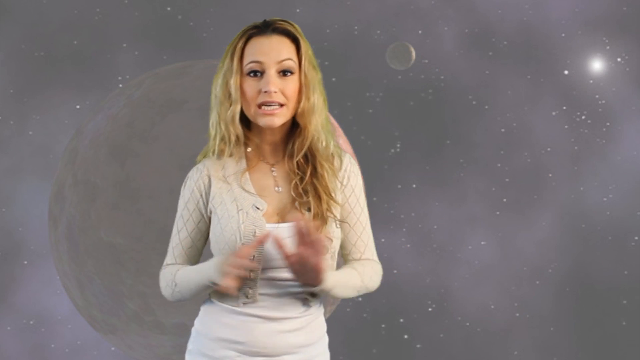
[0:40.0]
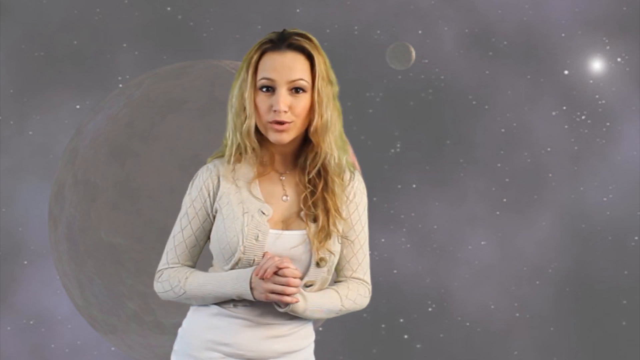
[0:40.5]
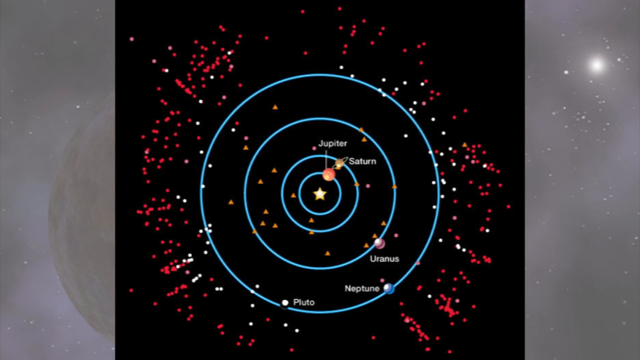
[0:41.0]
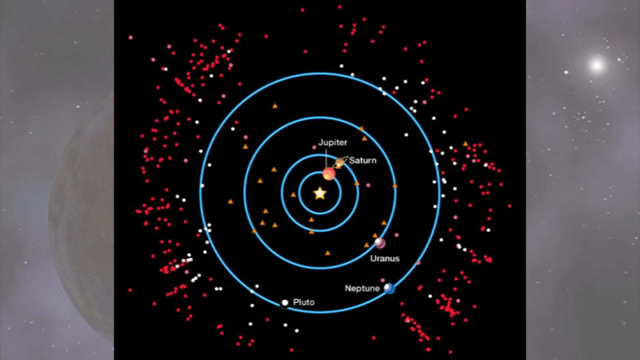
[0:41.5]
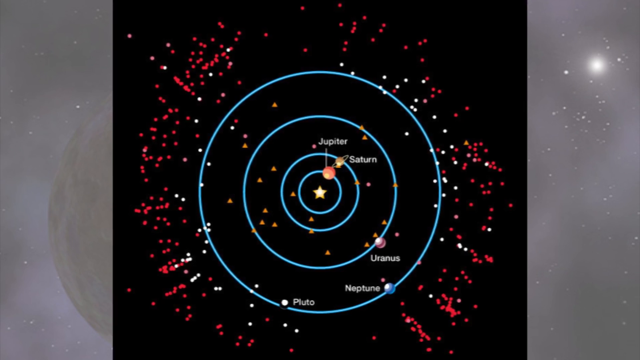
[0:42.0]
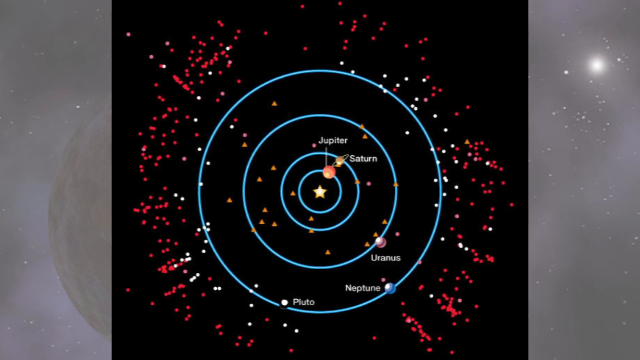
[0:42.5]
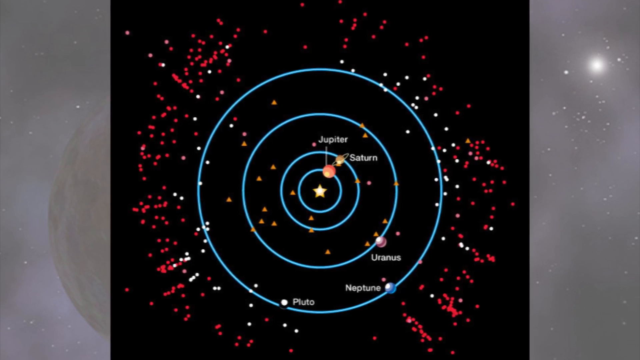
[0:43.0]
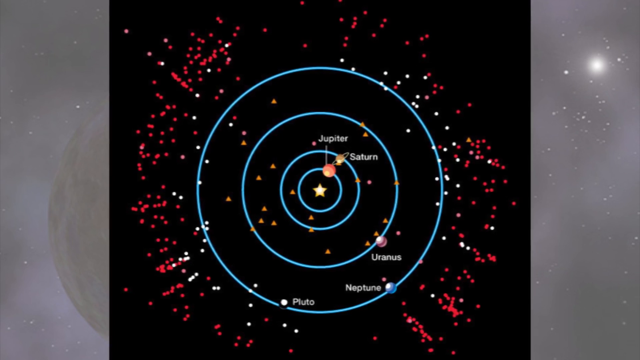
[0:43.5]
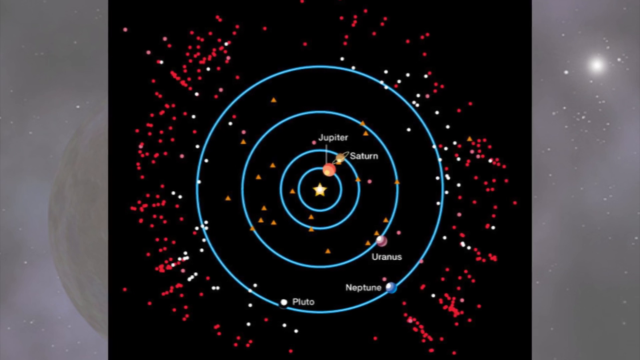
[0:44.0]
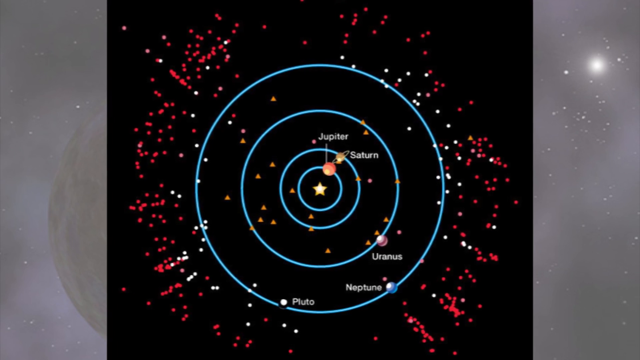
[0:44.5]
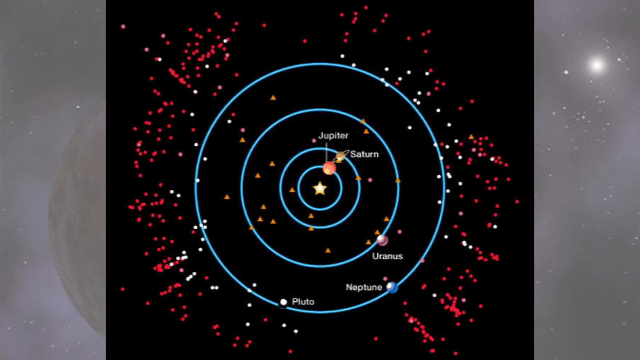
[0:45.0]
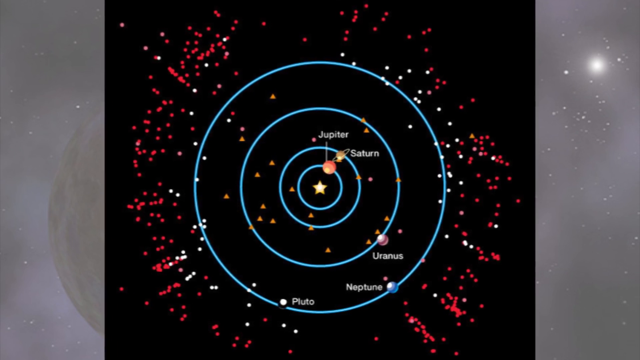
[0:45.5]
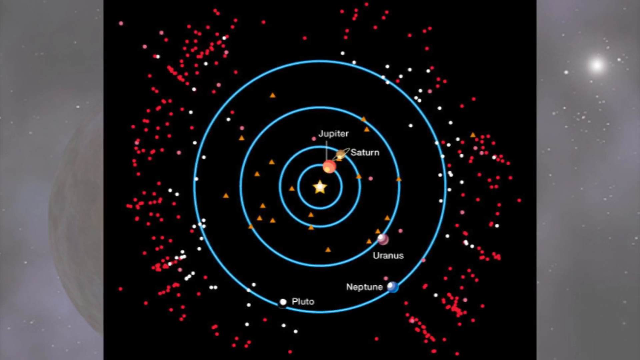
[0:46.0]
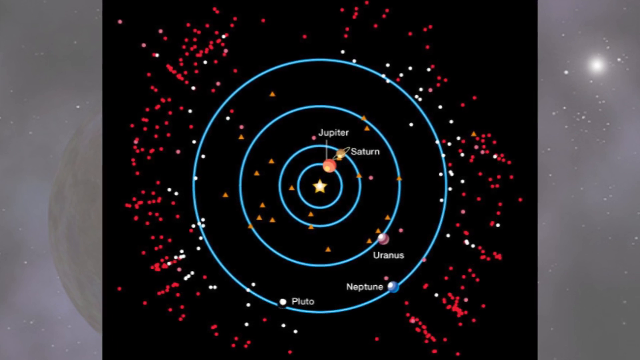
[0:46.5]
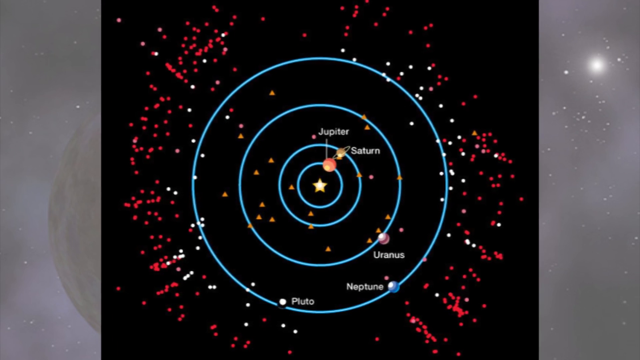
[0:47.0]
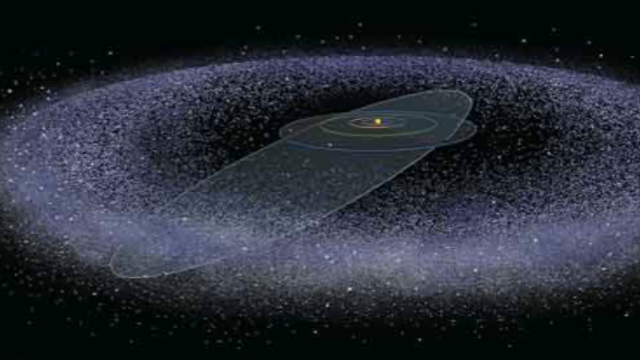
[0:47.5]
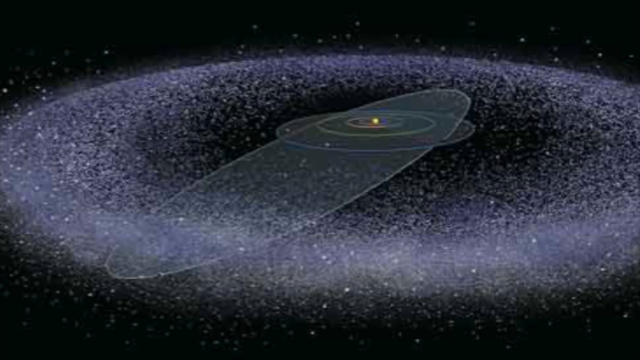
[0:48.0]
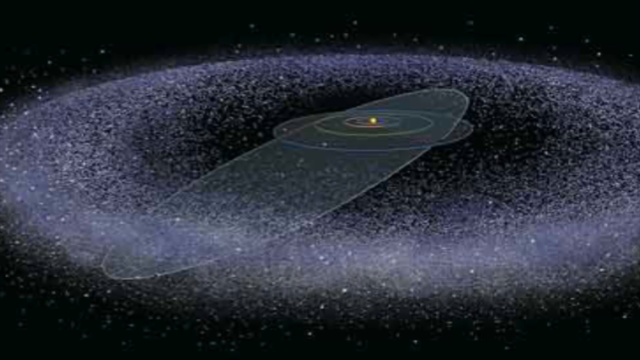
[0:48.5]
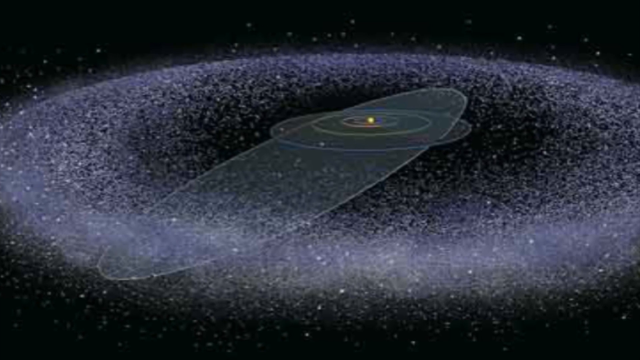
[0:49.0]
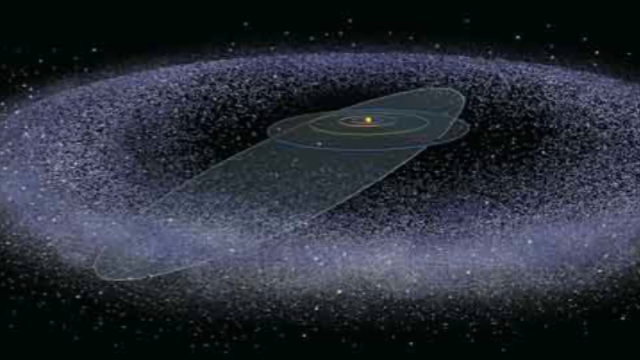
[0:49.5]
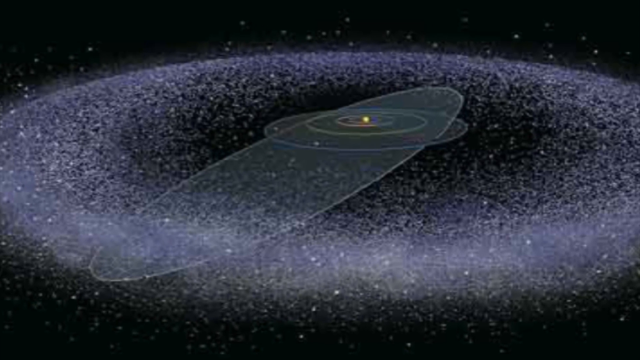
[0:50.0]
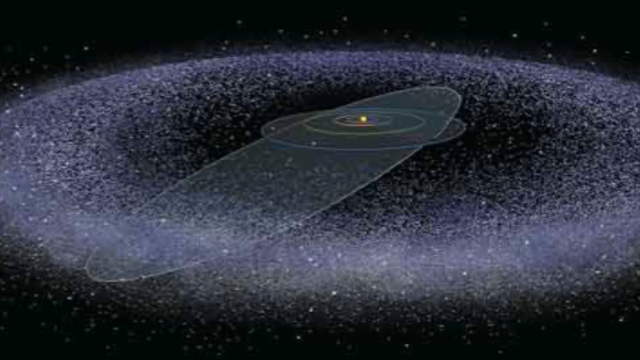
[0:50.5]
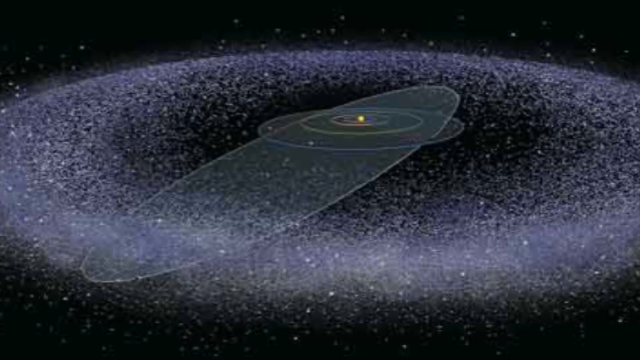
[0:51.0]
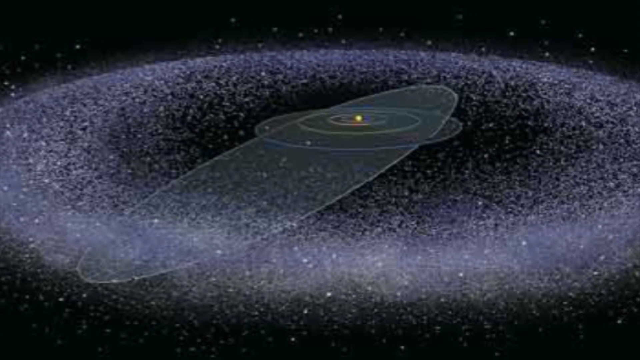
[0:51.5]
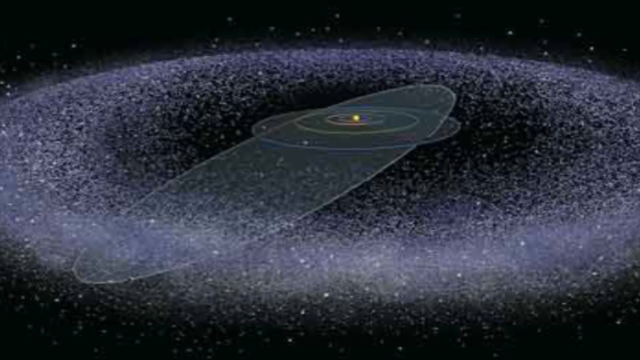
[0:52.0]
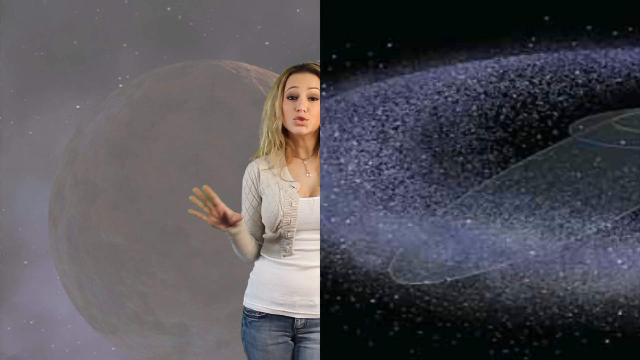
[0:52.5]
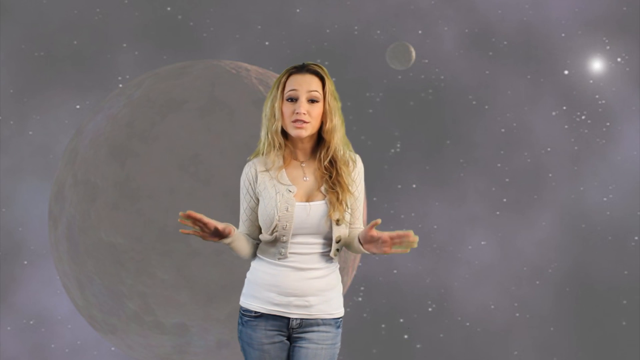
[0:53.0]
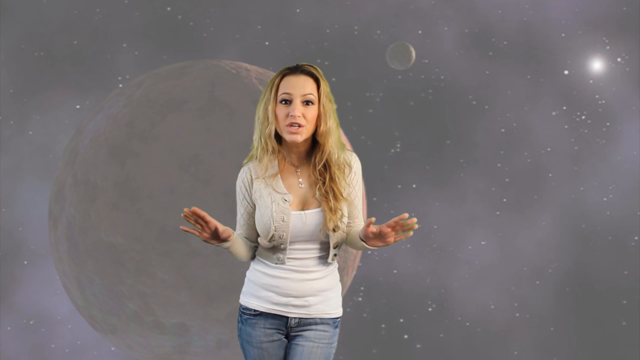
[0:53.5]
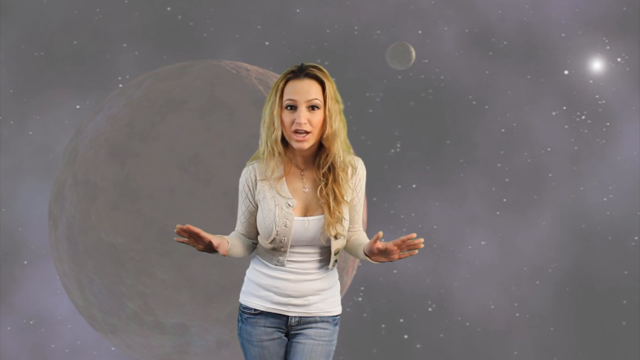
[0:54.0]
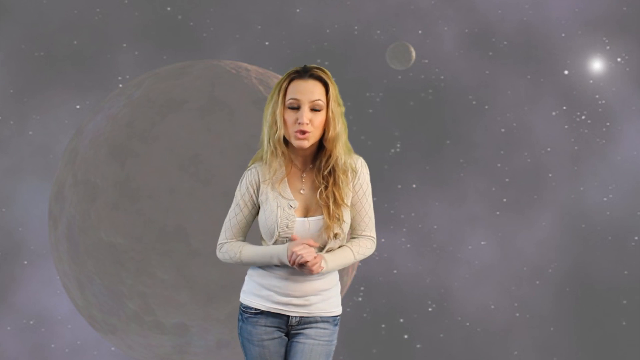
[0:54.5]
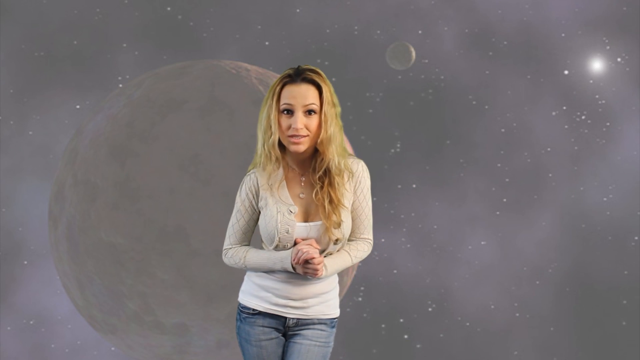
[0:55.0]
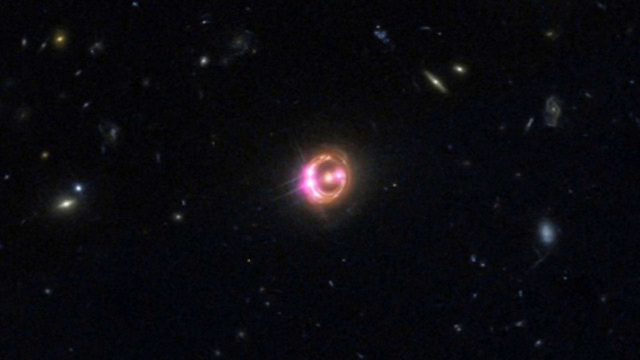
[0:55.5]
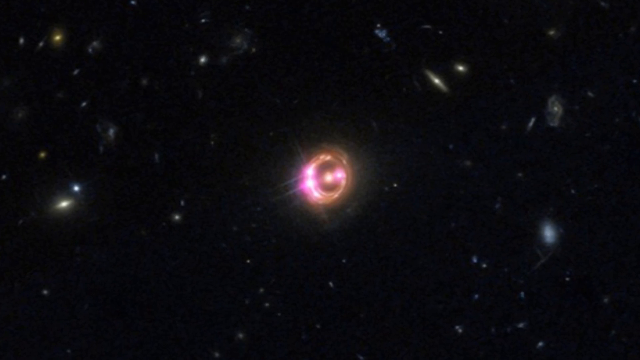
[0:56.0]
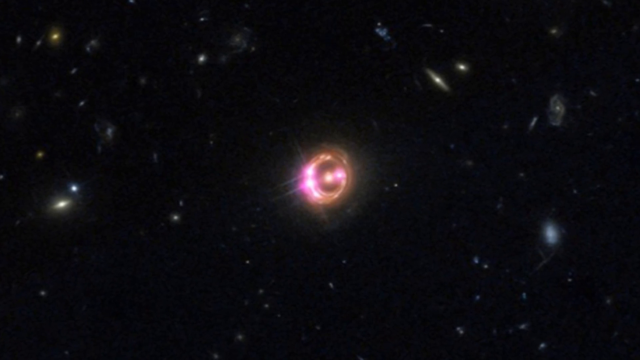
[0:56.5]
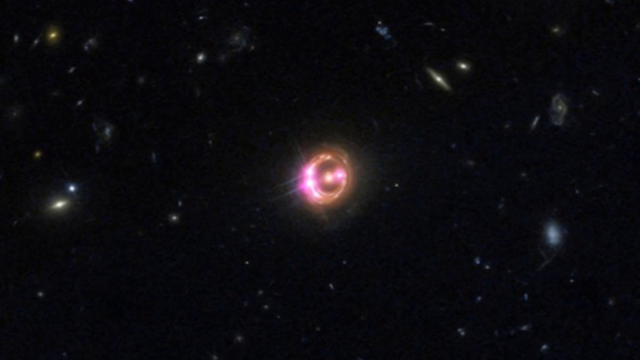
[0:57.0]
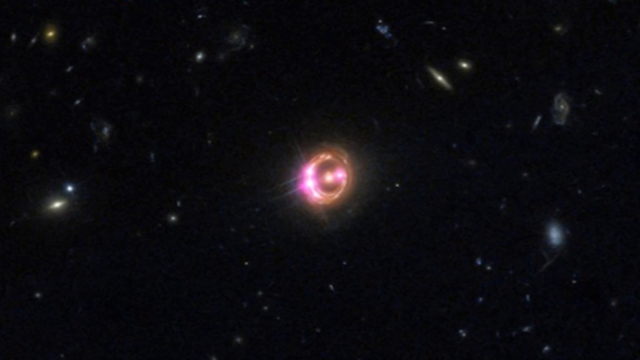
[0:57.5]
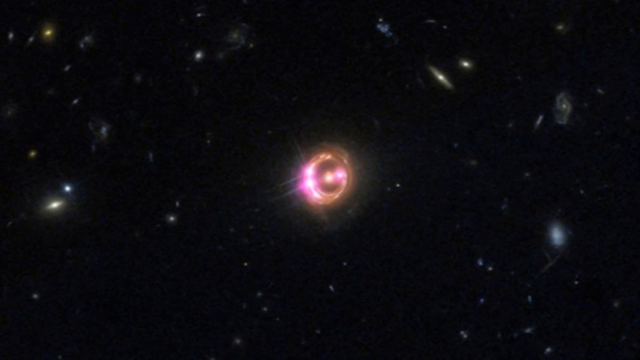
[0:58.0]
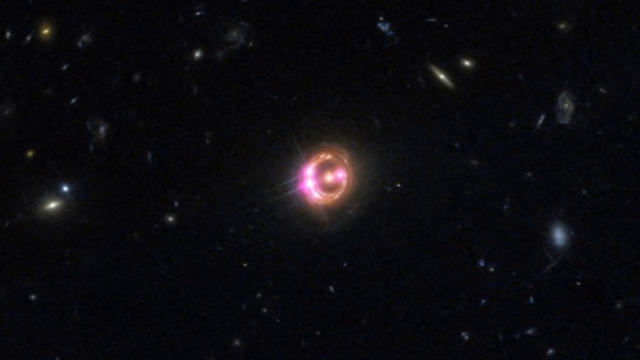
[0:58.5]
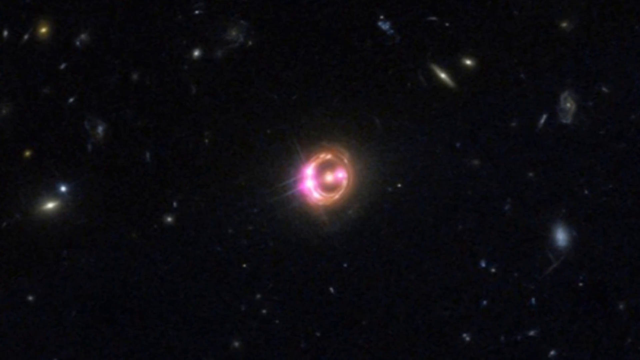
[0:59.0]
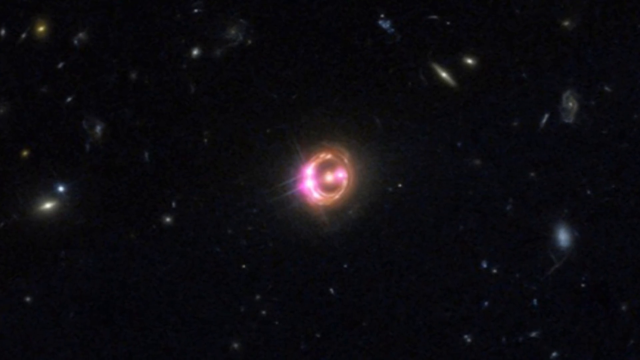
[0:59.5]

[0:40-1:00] A blonde woman with long, wavy hair, in a cream sweater and camisole, gestures and clasps both hands together as she speaks. An illustration of the solar system follows, showing about four planets on their orbits: Jupiter, Saturn, Uranus, Neptune and Pluto, on blue orbits that look like concentric rings. Spatters of red dots surround the outer ring of the orbits, and there are some white dotted spatters on it too. Next is a different image in grey and black showing four concentric orbits and an orbit that looks like an ellipse intersecting the other four. The camera pans closer toward the orbits. The woman in the cream sweater with long blonde wavy hair is then seen speaking. Another image follows that looks like outer space with distant planets or galaxies, with a planetary body prominent in the middle emitting pinkish light.